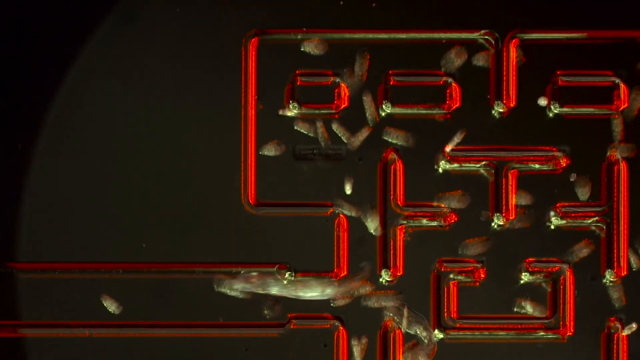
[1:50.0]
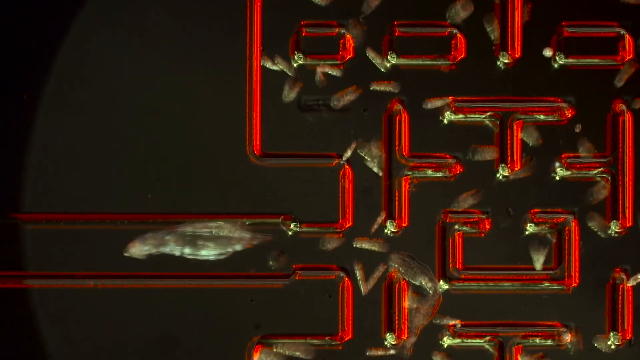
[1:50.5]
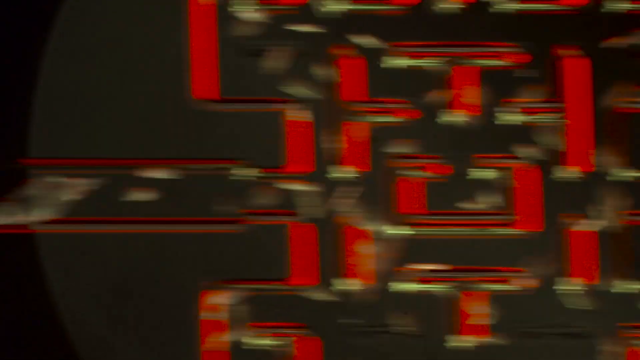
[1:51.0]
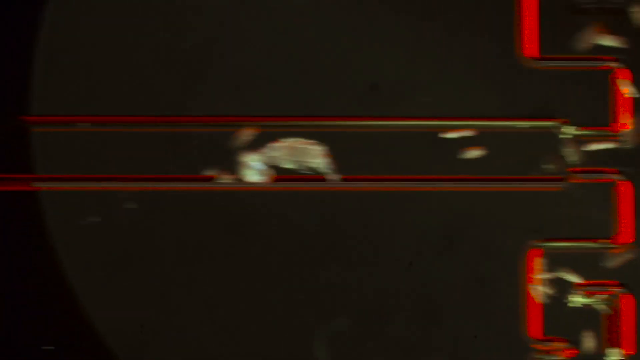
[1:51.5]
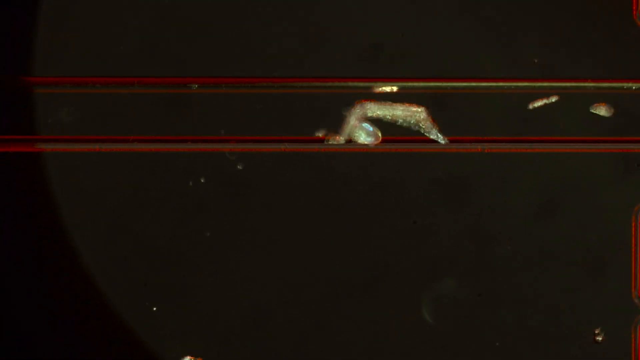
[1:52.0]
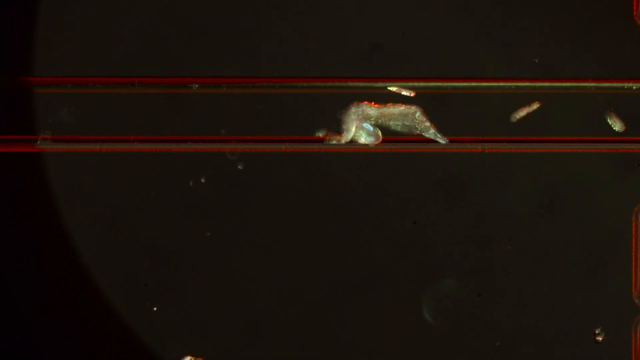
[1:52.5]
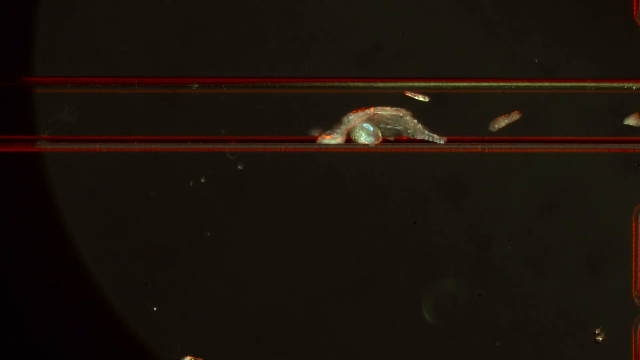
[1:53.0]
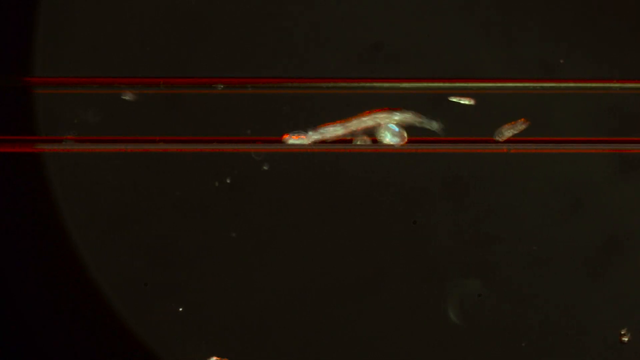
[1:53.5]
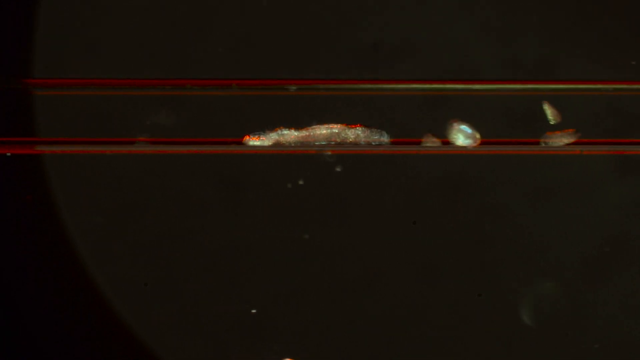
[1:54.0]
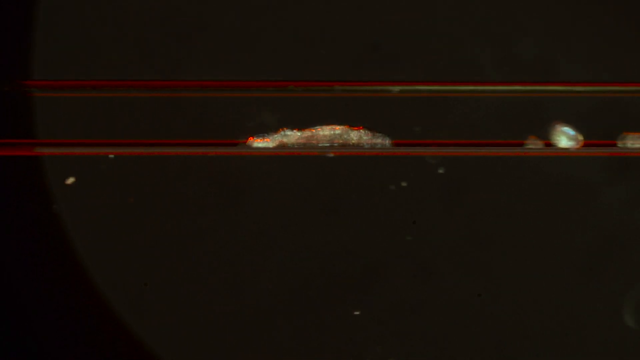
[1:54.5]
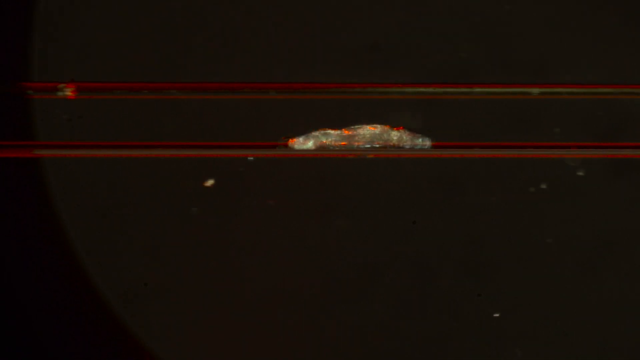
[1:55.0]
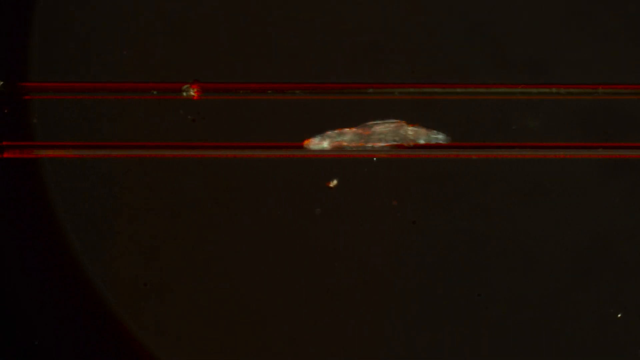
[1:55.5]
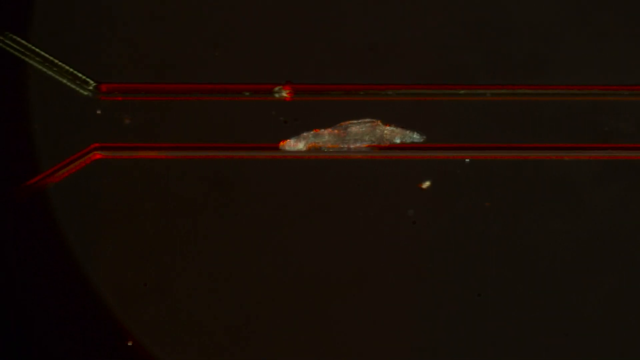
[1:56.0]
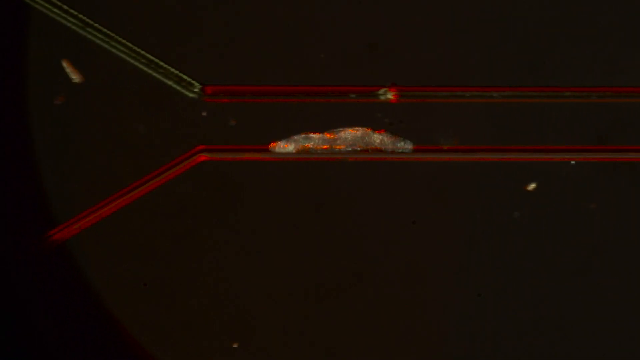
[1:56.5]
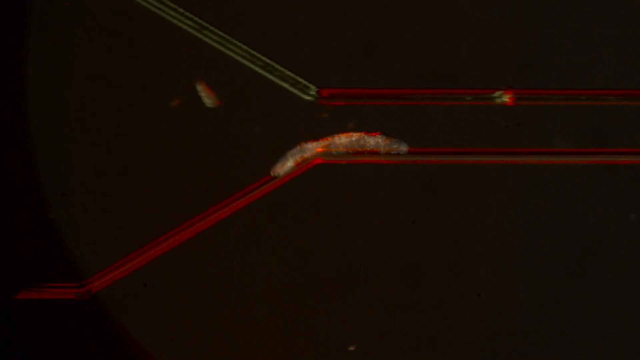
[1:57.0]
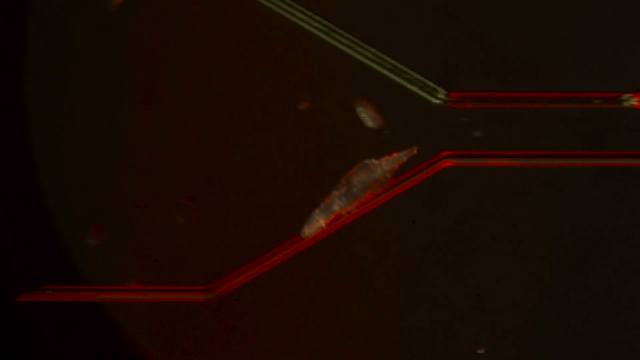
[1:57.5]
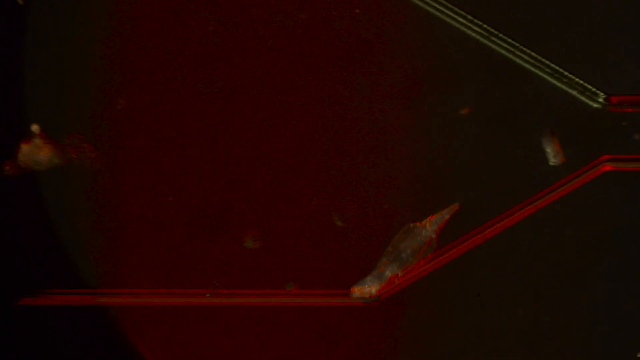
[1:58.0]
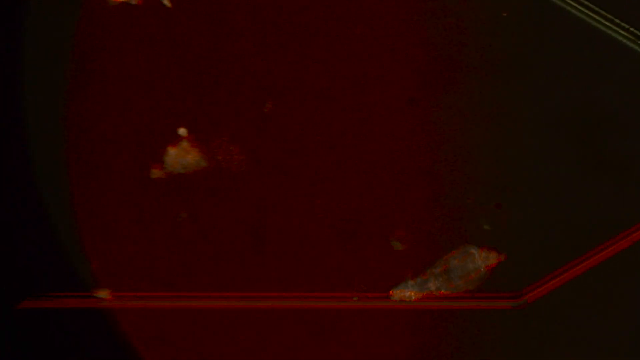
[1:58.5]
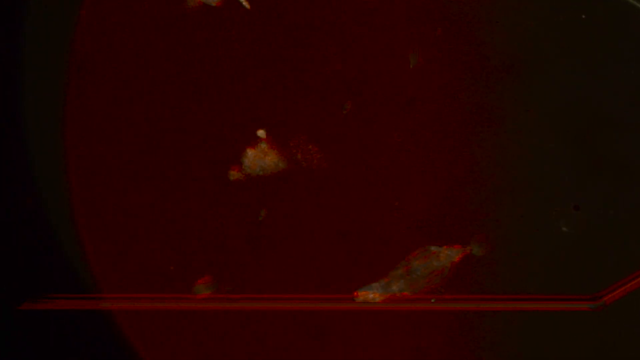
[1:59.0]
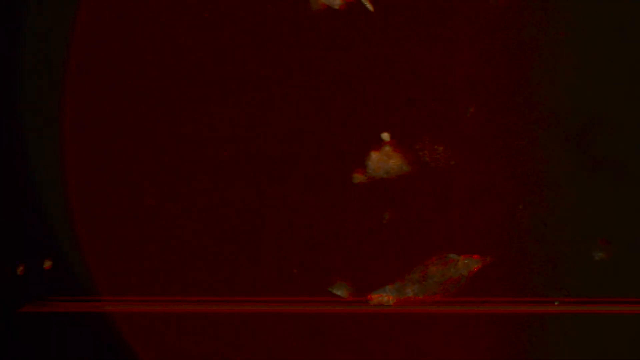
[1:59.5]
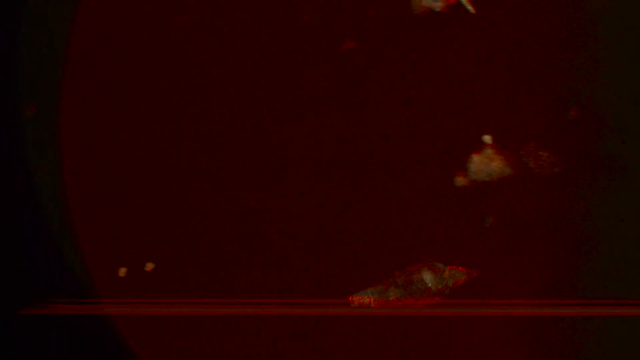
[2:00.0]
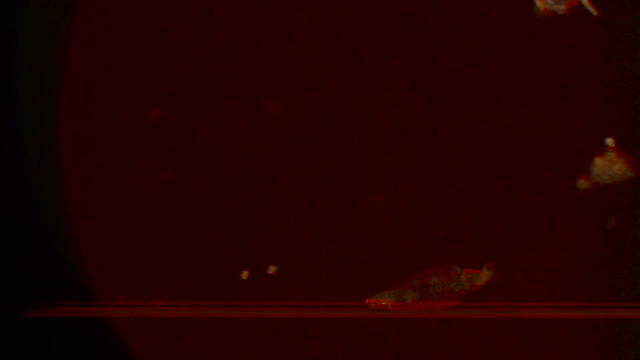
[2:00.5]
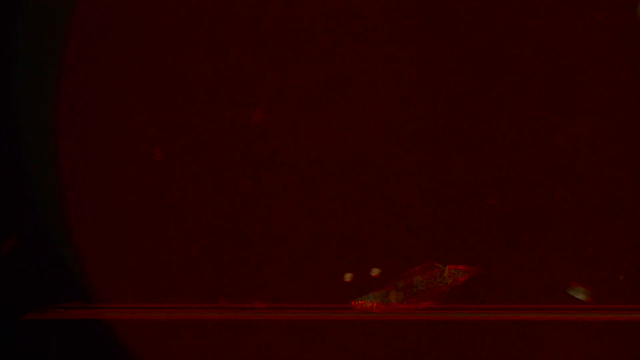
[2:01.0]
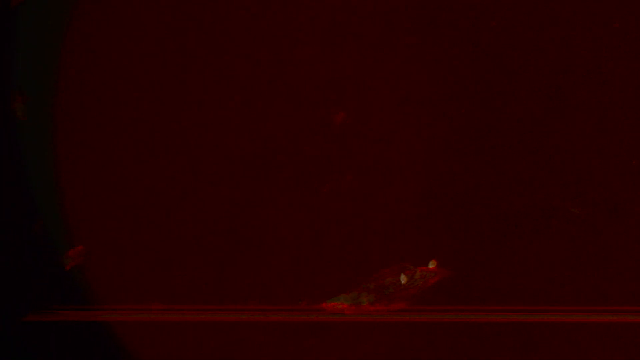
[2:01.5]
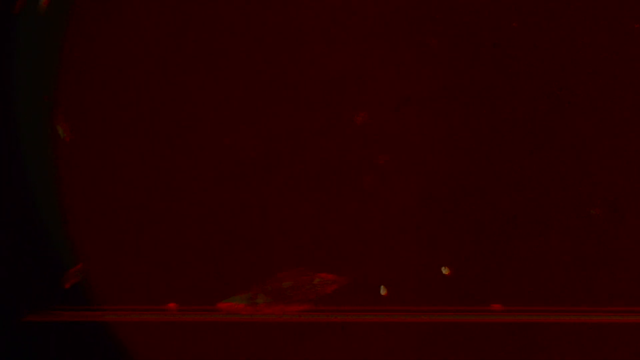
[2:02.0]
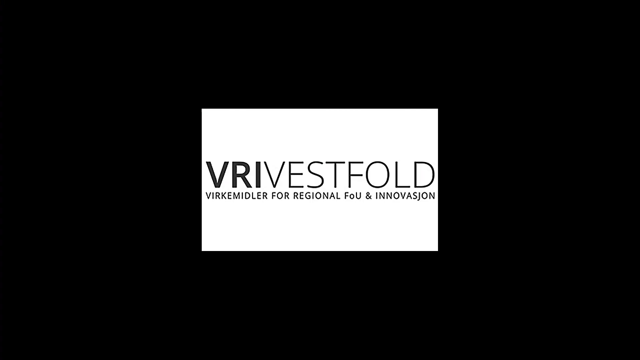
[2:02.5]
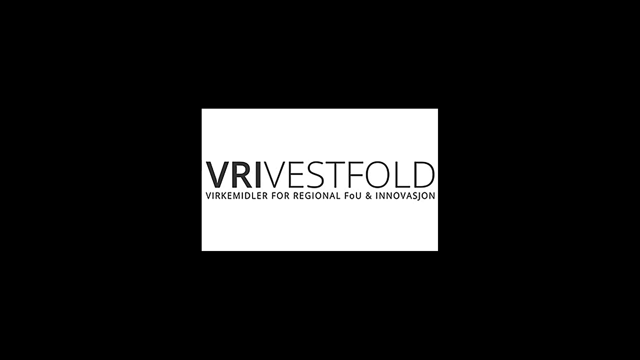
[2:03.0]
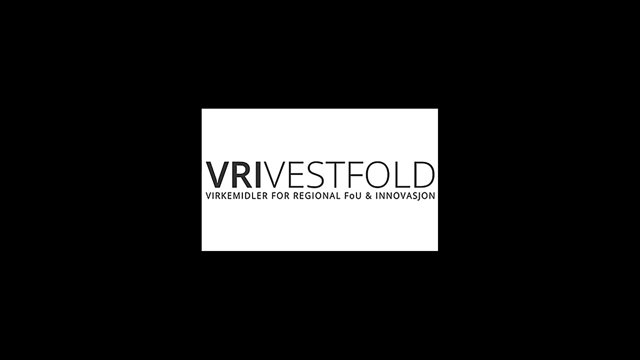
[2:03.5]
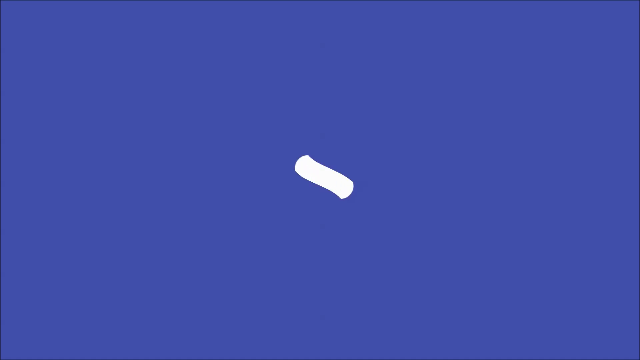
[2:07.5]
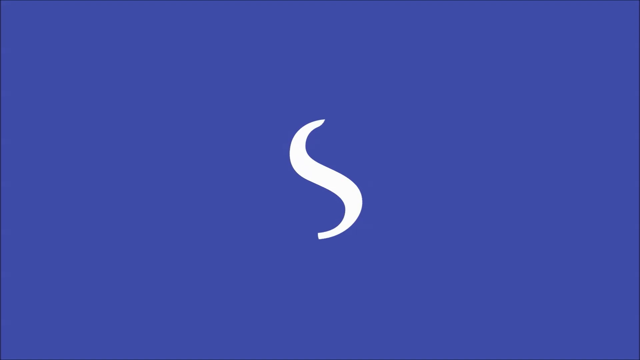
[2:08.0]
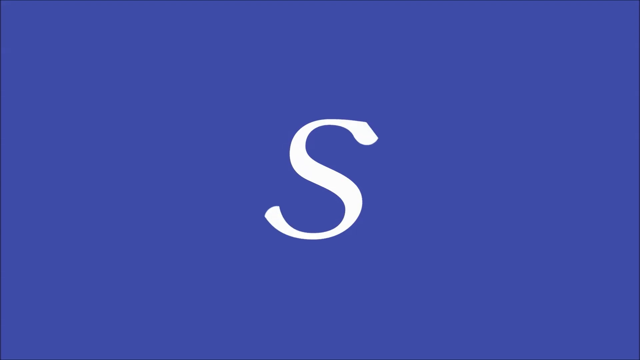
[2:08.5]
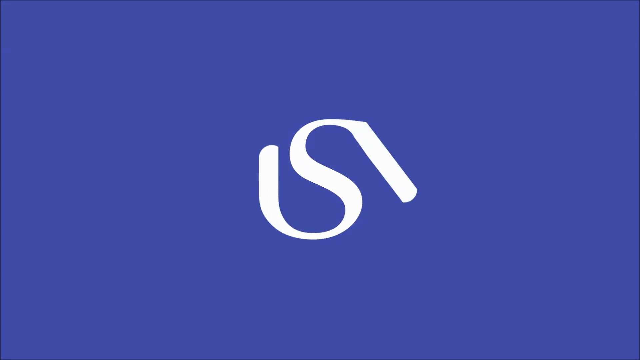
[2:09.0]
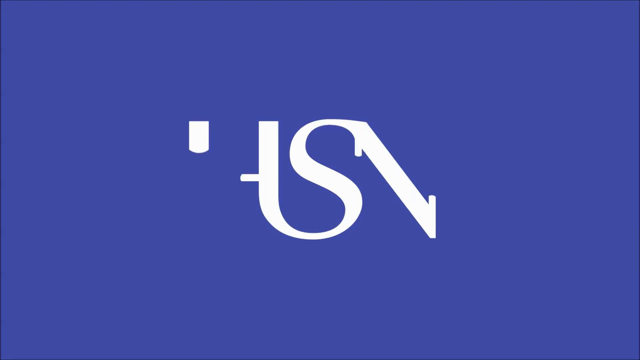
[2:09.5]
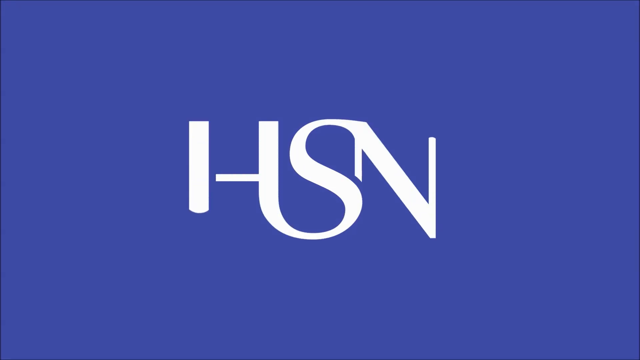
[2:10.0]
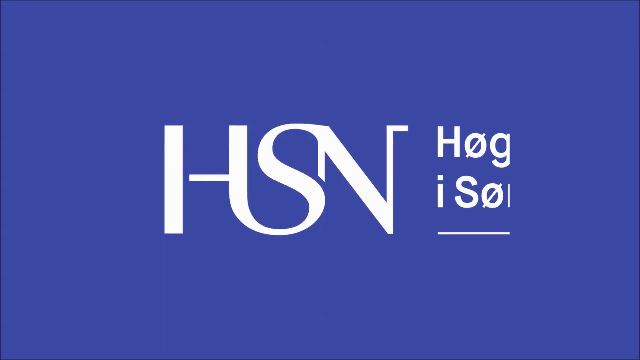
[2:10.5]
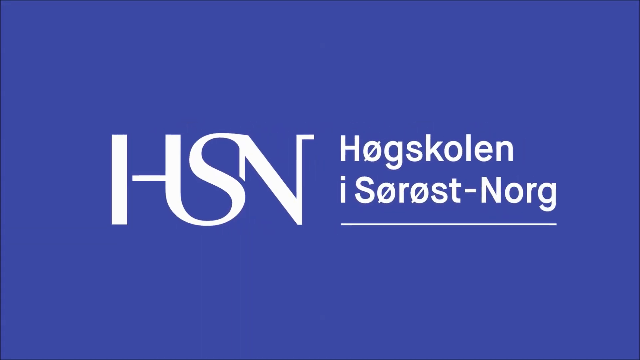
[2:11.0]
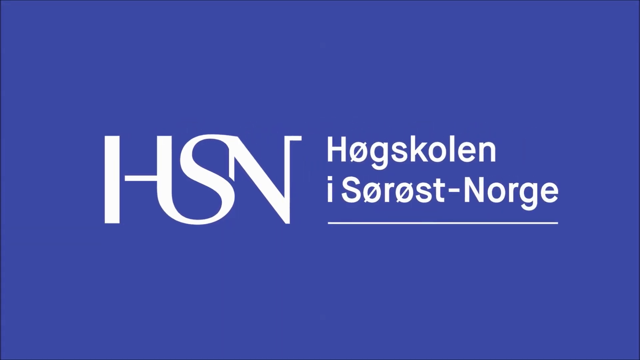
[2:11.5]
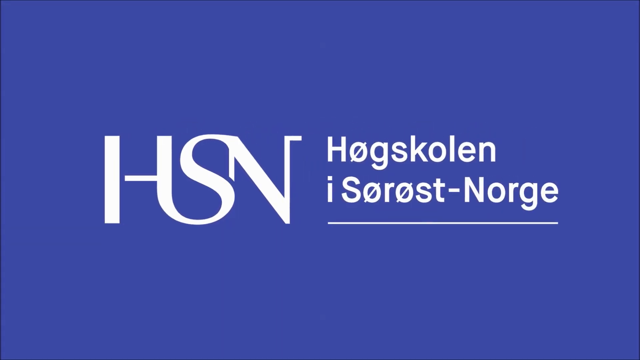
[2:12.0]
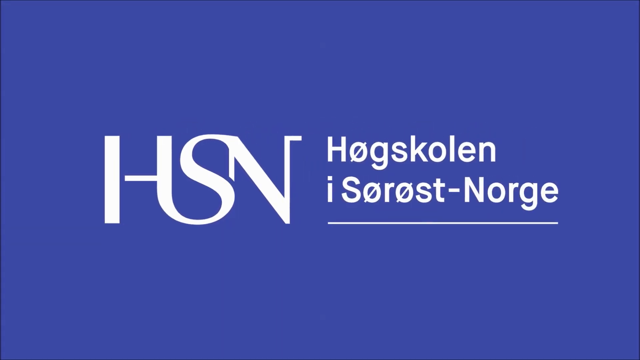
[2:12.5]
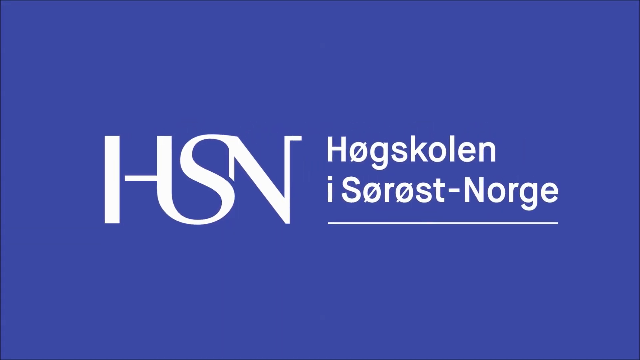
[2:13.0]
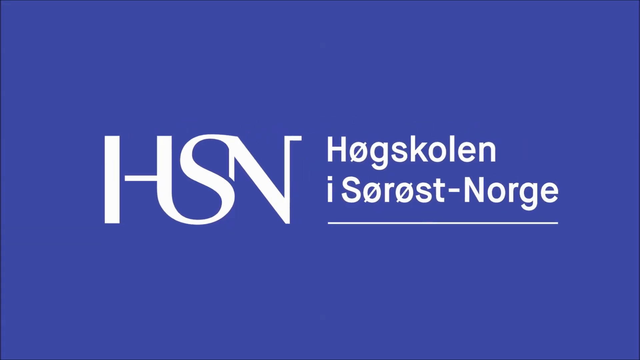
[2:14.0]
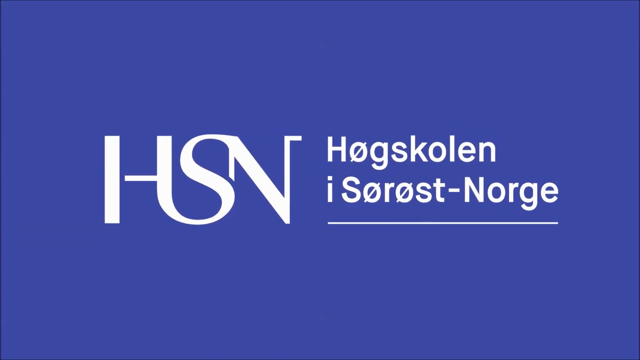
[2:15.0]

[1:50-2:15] Creatures move around the red maze, and the creature from before moves left along the corridor. The camera seems to lose track of it for a moment, then pans sharply left to focus on it again. It appears to be somewhat stuck to the bottom wall and is stretching around; it seems to be stuck on another shape that is also along the wall. Eventually it gets past and continues along the long left corridor, reaching an opening or widening section, still sticking to the bottom wall and moving along swiftly. The area around it is somewhat darker but red in the background. A logo then appears with the text "Vri Vestfold" and text in a foreign language below it; the text is on a white background forming a small rectangle inside a larger dark background. The logo stays on screen for a few moments, then the screen turns blue and letters gradually form reading "HSN", with text in a foreign language appearing to the right of it.